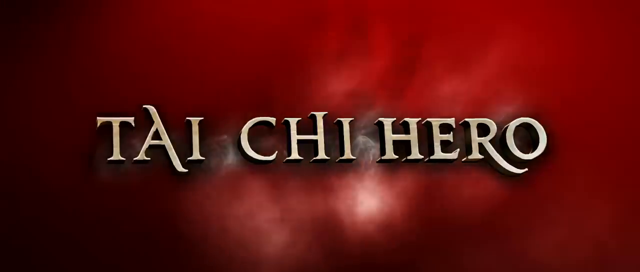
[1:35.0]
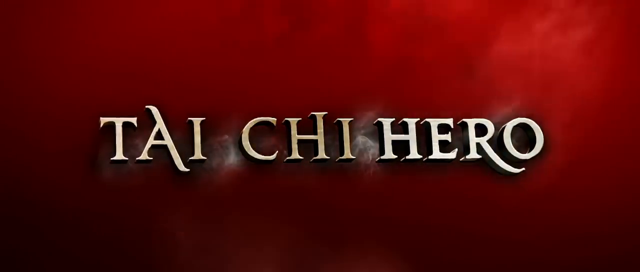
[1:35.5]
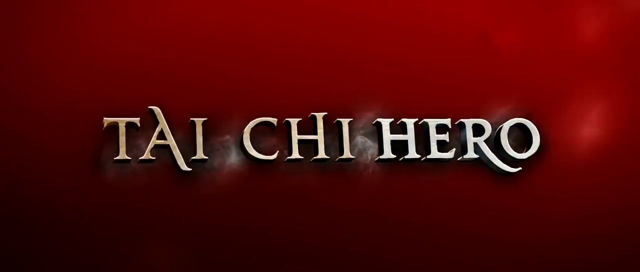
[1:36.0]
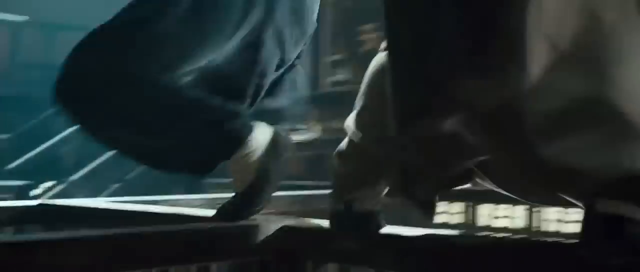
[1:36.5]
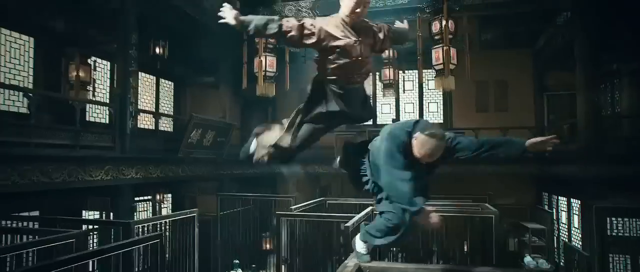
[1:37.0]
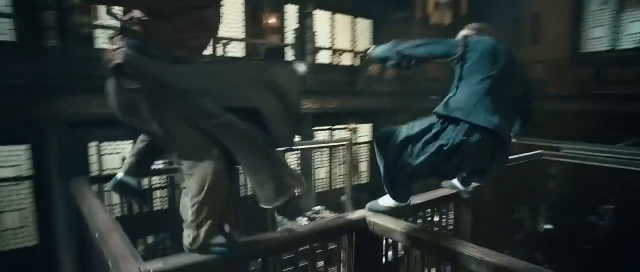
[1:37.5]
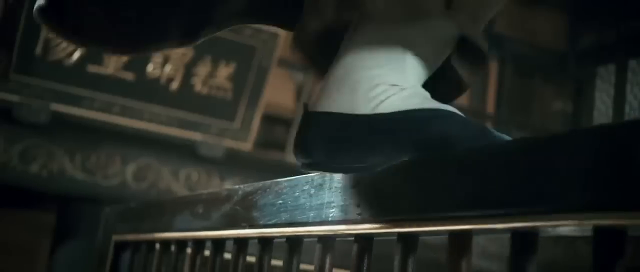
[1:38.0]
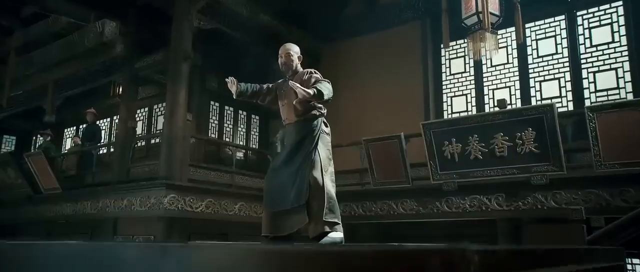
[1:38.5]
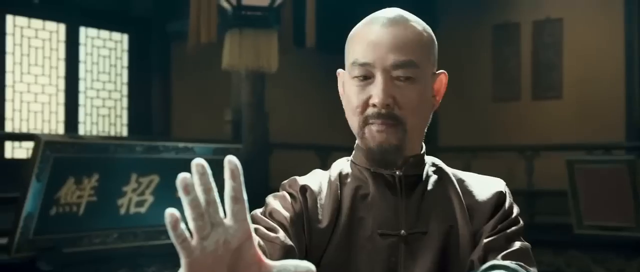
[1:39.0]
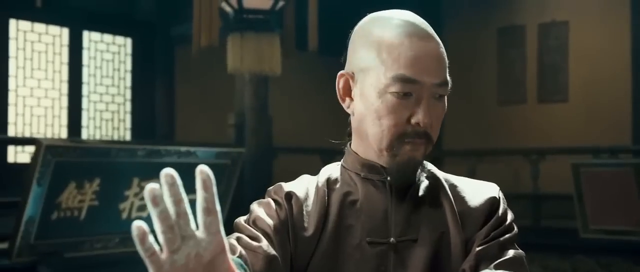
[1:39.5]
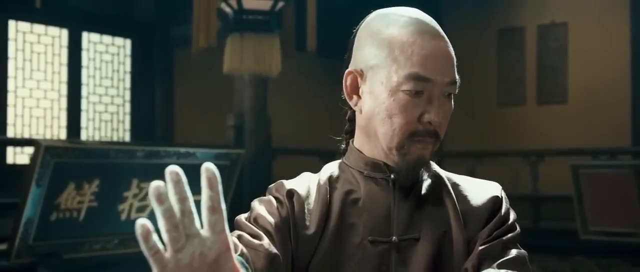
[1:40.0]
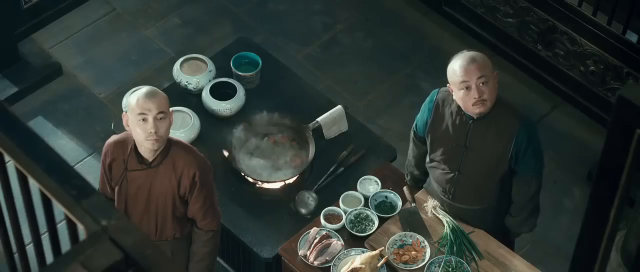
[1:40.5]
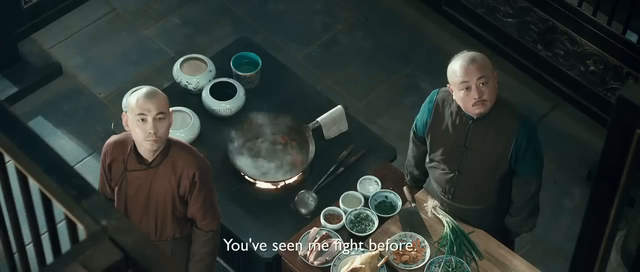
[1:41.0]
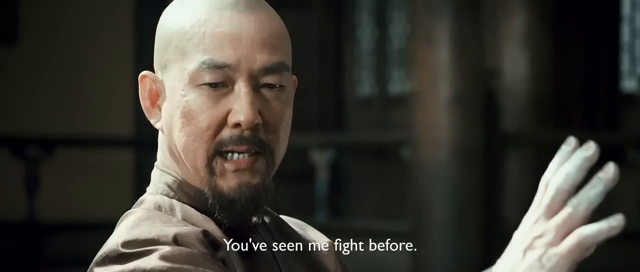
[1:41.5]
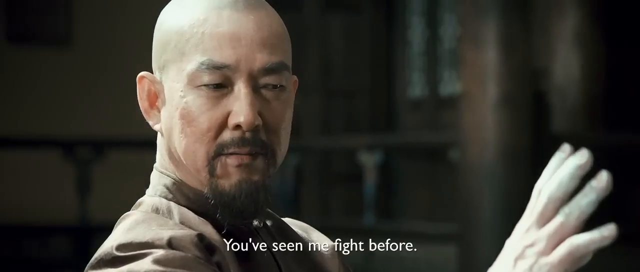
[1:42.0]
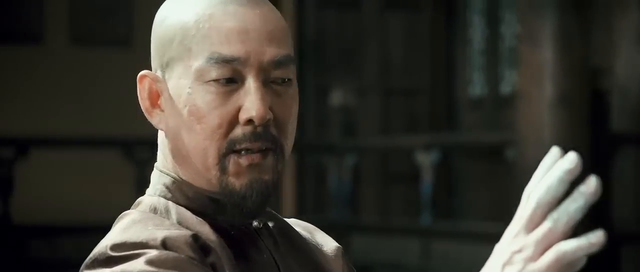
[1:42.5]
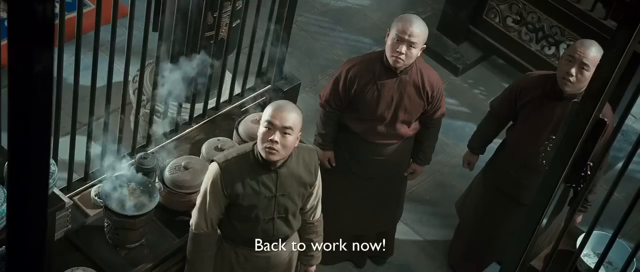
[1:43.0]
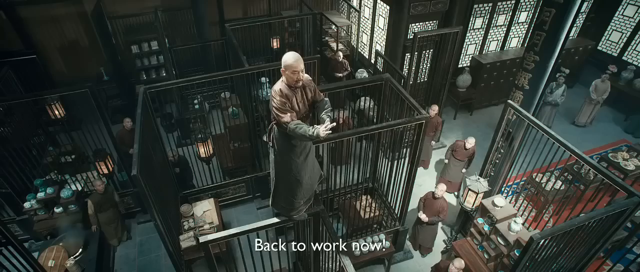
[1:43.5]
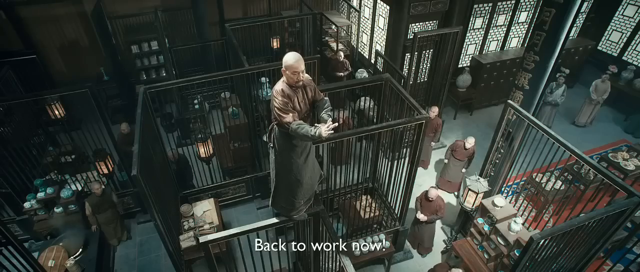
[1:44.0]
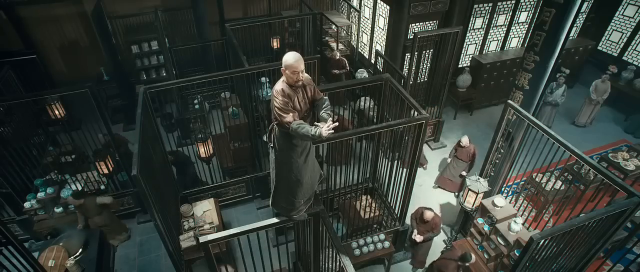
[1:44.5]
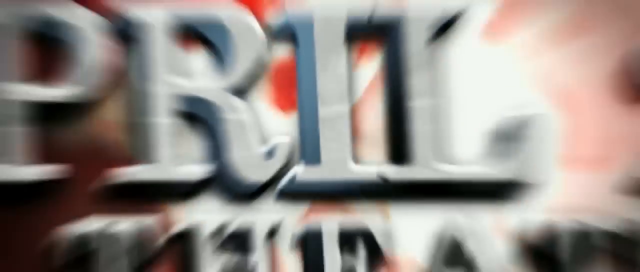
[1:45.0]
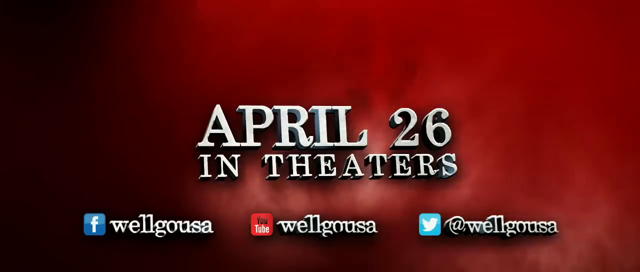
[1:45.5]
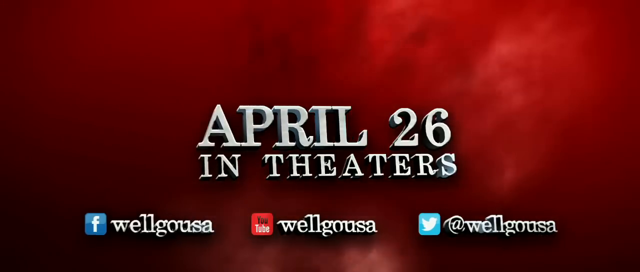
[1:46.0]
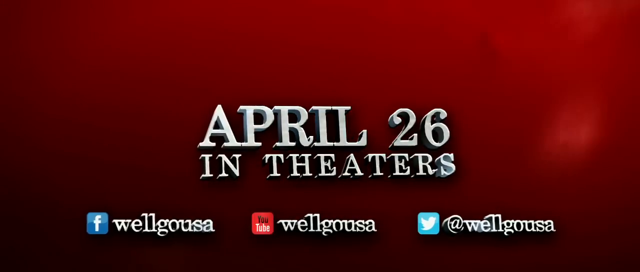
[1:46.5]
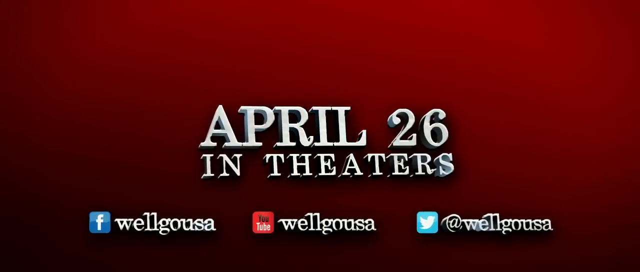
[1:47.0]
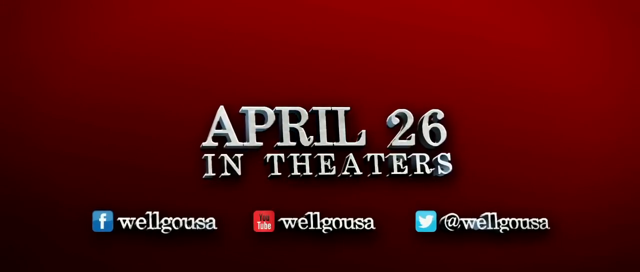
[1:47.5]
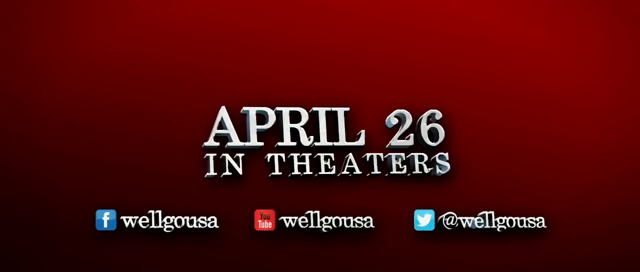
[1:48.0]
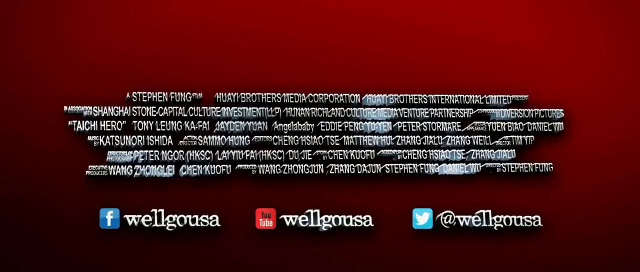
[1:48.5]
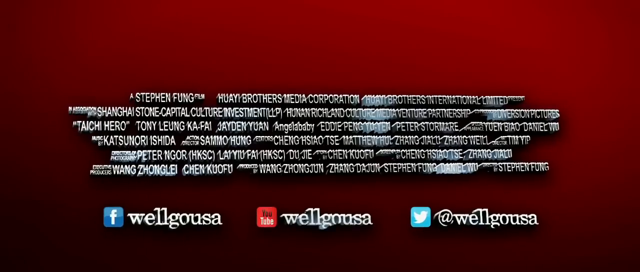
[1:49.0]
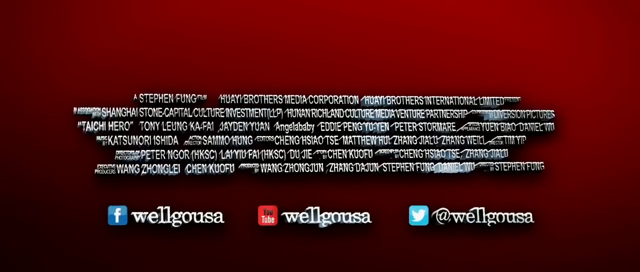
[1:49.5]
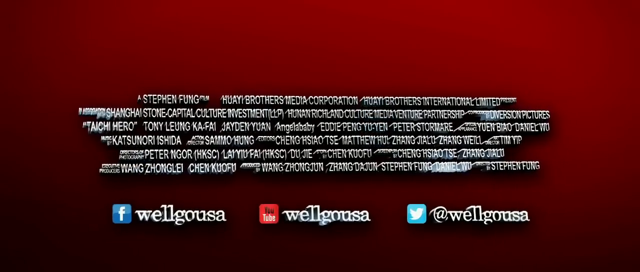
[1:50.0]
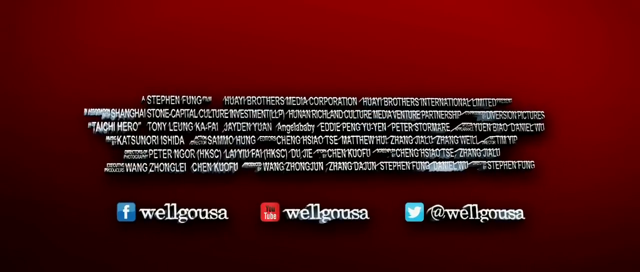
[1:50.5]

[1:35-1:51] Two men fight on what seems to be some kind of wooden dividers, very tall, possibly over 10 feet in the air, both trying to keep their balance during the fight or training. Other men below, who seem to be serving food, look at the men fighting. One of the men at the top looks down and tells them they've seen him fight before and should get back to work, so they break up and continue their duties. Asian writing, very likely Chinese, appears on signage and columns. The date, April 26, in theaters, is given, indicating when the movie will debut, along with other small text. In the lower right-hand corner is a small triangular white sign with black letters telling viewers to subscribe.